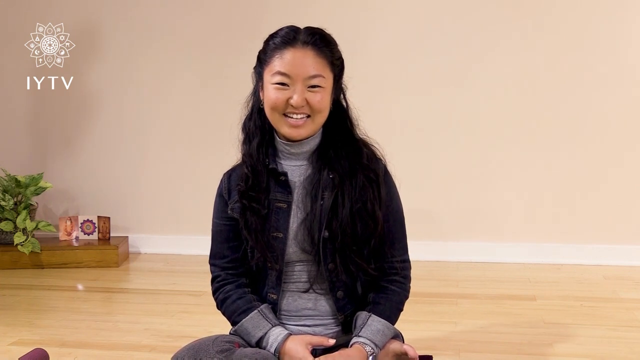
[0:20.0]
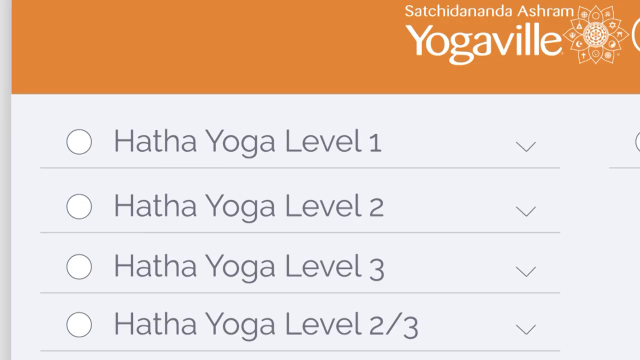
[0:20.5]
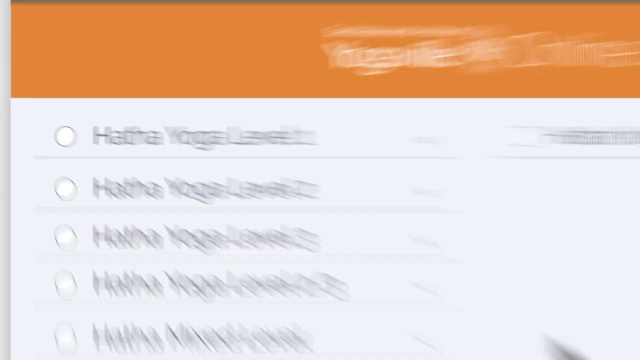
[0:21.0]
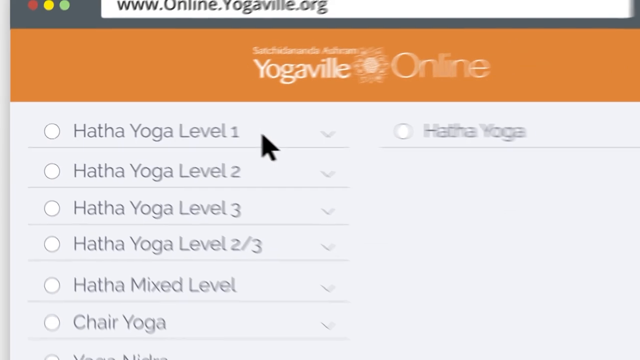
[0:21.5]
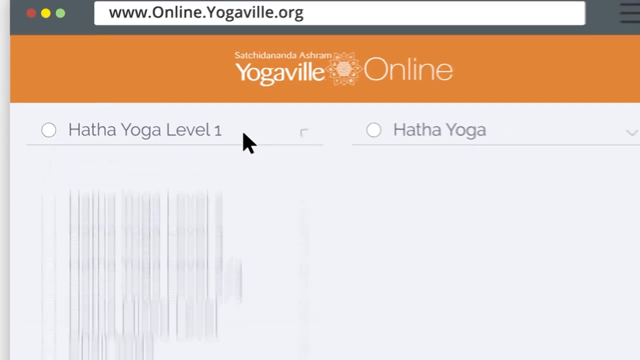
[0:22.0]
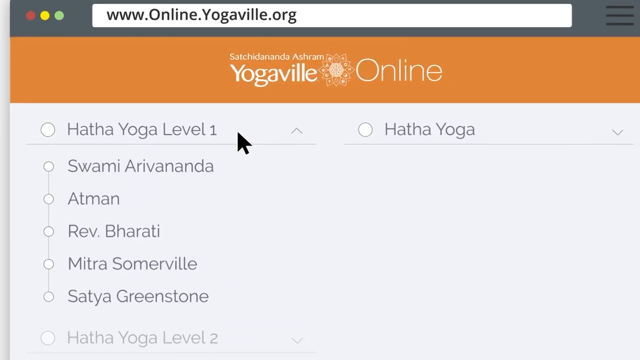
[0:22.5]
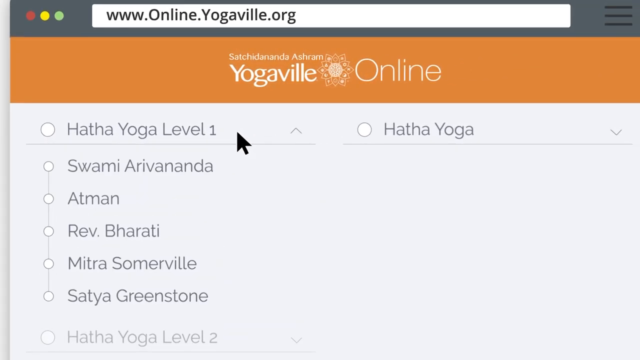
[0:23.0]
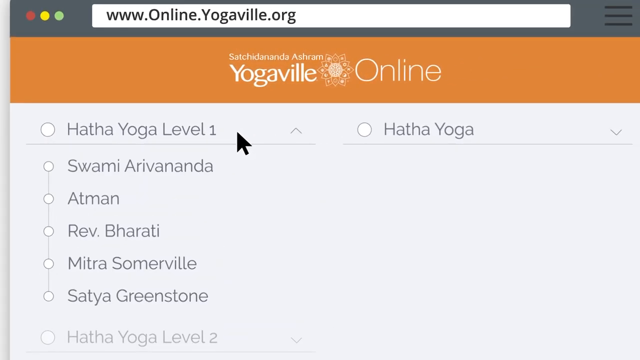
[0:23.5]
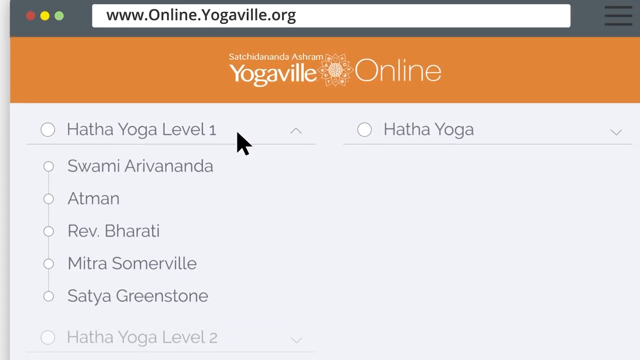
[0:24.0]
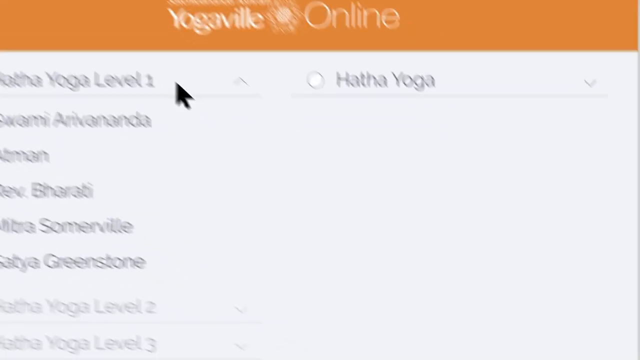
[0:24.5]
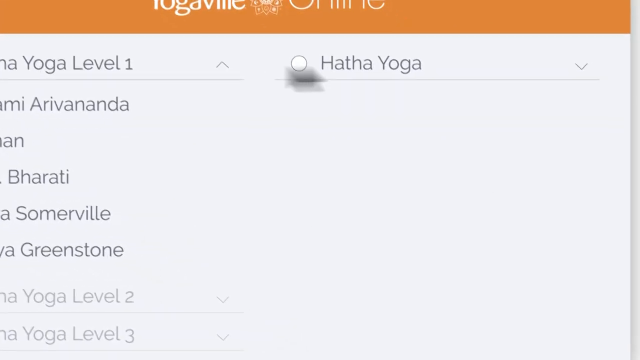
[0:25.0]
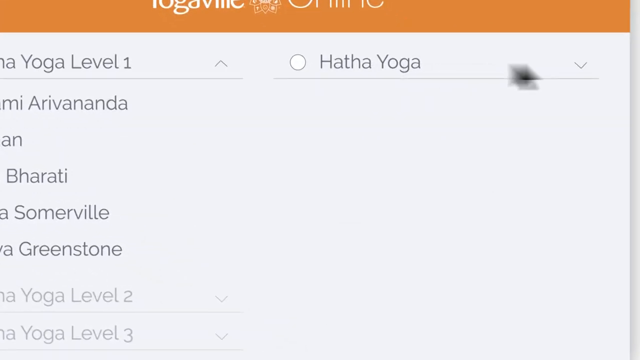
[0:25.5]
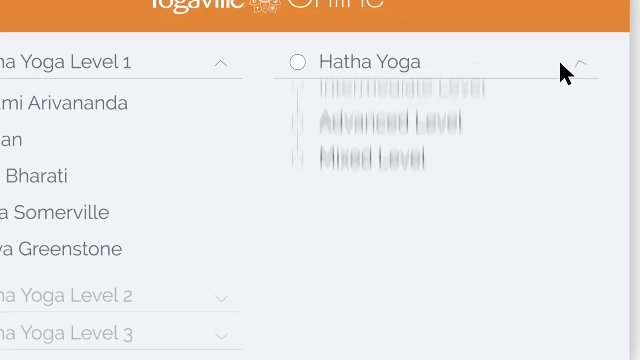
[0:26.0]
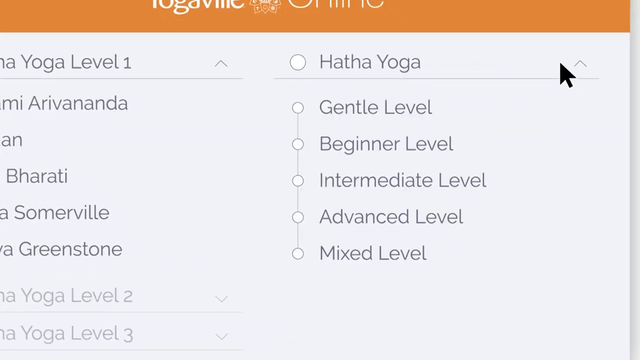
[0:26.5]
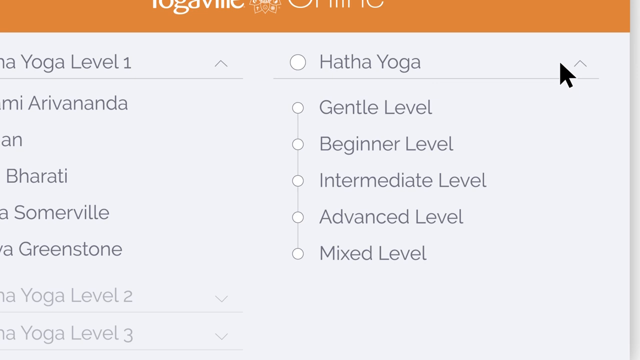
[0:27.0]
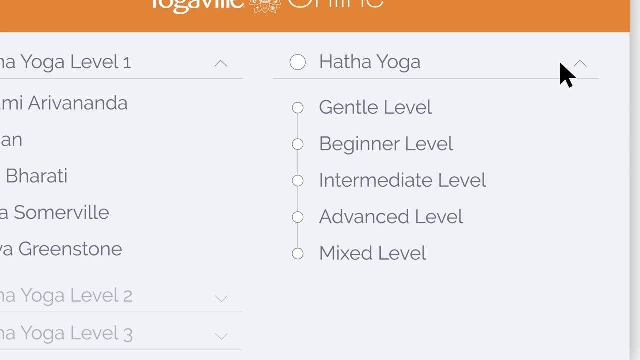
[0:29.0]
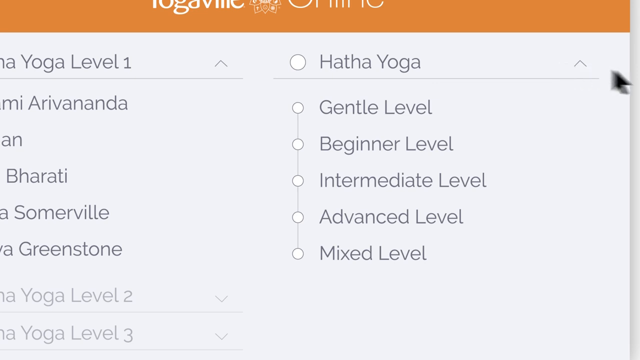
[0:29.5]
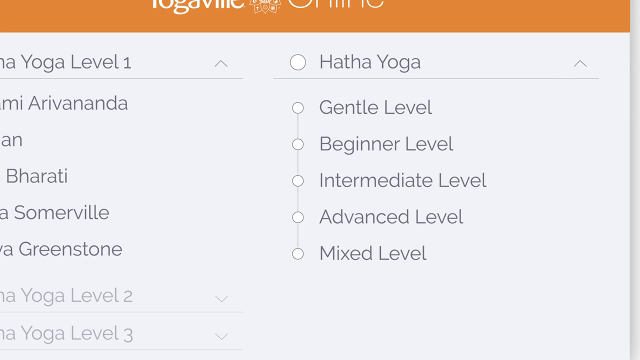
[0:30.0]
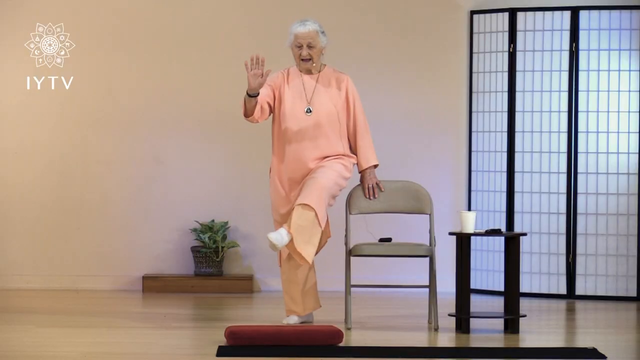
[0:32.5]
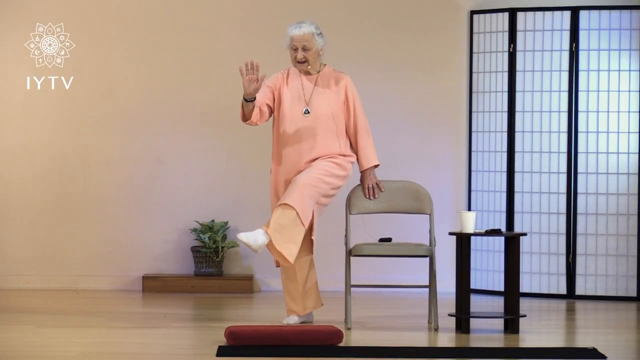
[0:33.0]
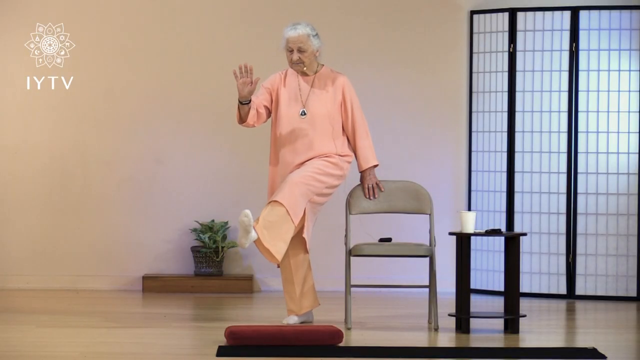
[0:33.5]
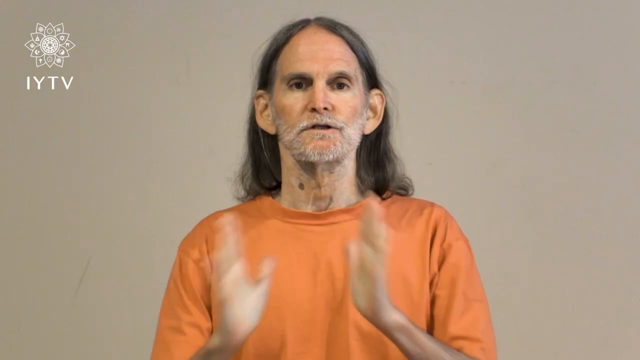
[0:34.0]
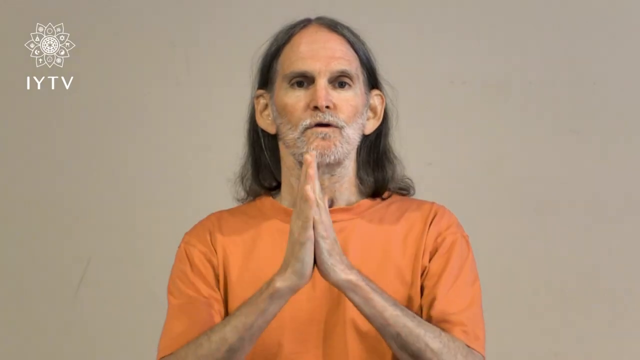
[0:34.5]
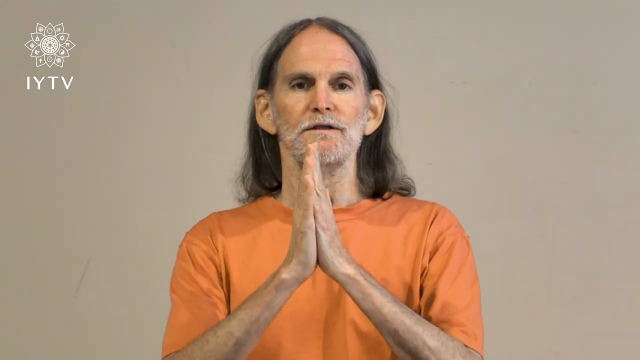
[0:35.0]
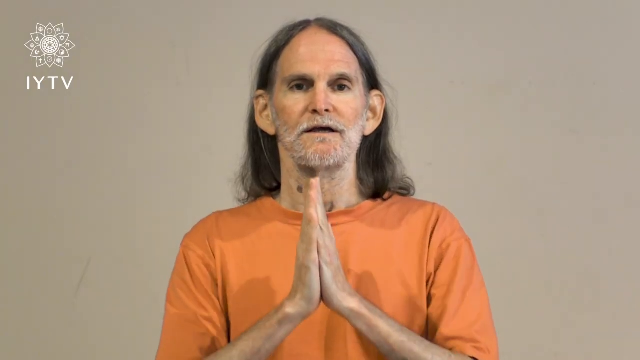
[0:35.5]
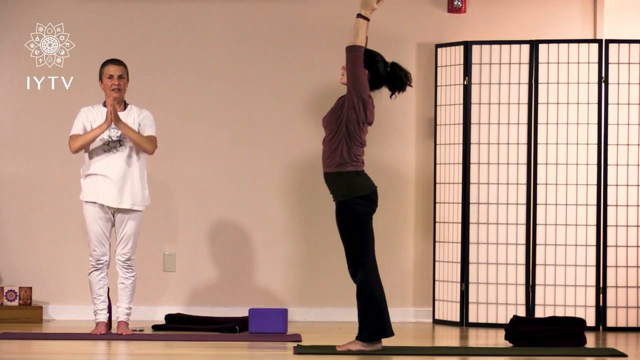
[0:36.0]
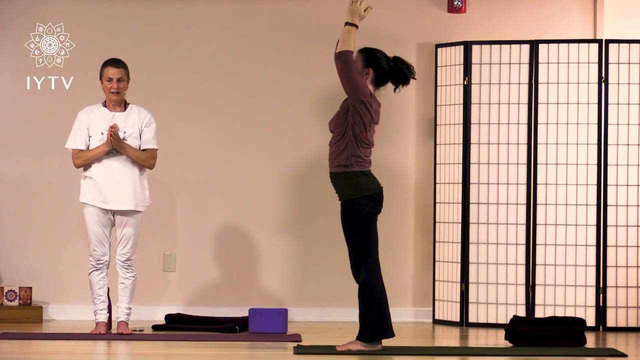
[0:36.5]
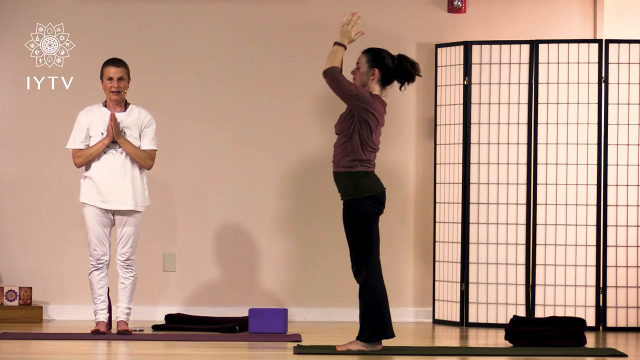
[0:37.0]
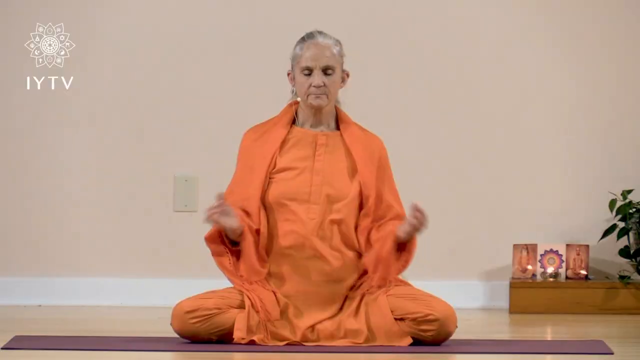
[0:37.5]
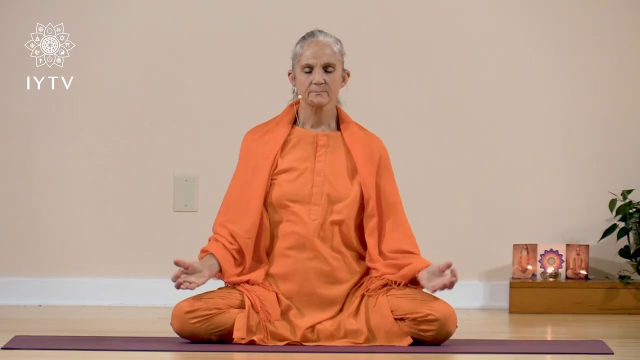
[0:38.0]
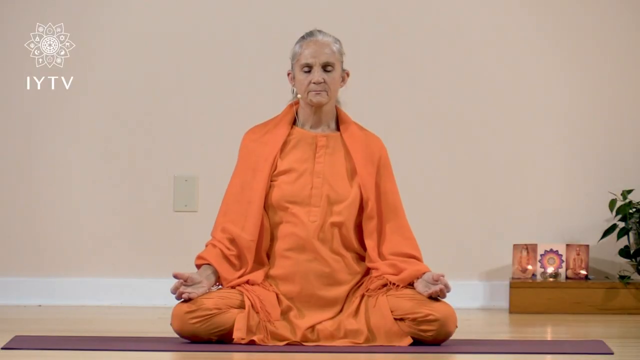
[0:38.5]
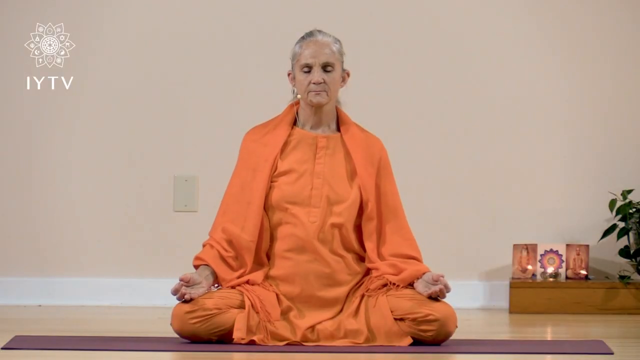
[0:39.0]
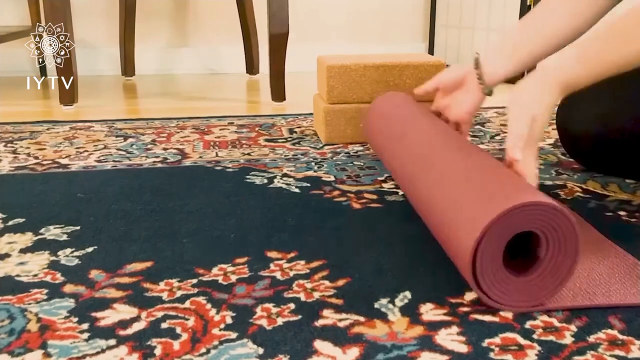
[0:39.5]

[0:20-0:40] A young woman of Asian descent sits on the floor in a studio, wearing a jean jacket and a gray turtleneck, with a beautiful smile on her face. A Yogaville online computer screen appears with the words "Hathaway Yoga". A lady stands next to a chair with her feet out, another man moves, and a lady sits in a yoga pose on the floor, meditating slowly. Someone unrolls a yoga mat on the carpet. Various people do yoga and meditation. One of the women, who looks like she is in her eighties, does yoga while holding onto a chair.